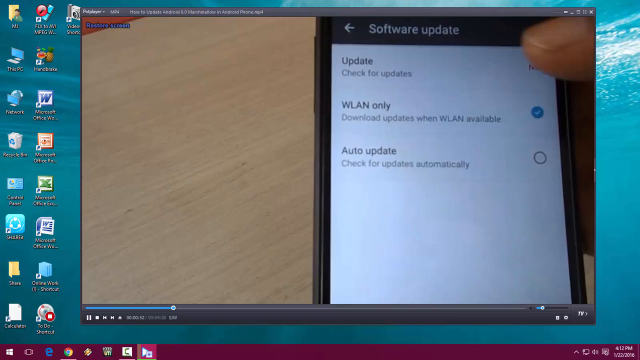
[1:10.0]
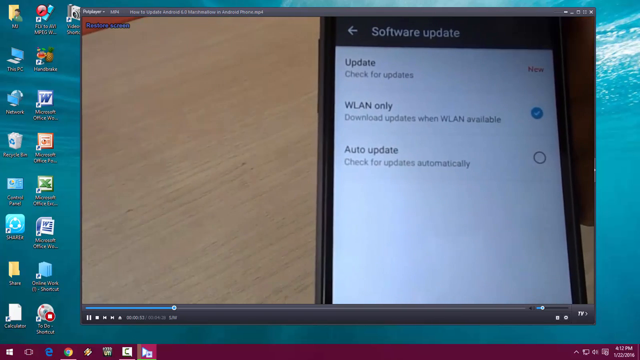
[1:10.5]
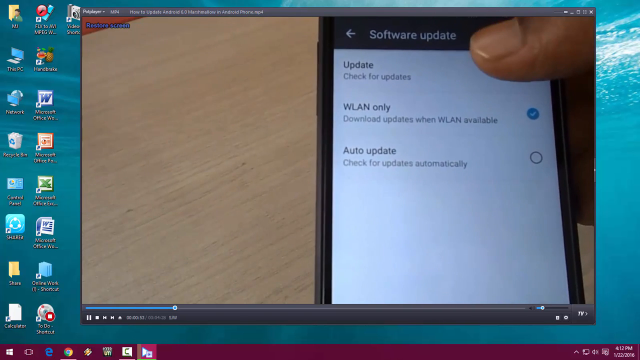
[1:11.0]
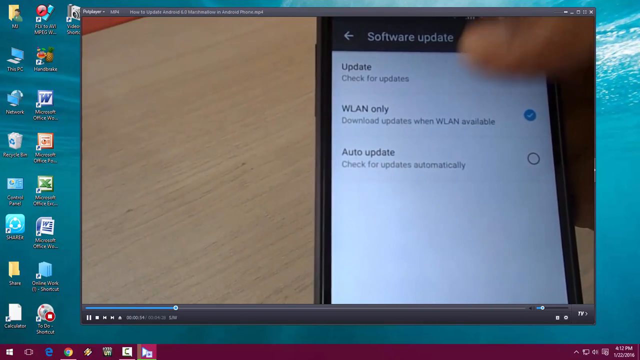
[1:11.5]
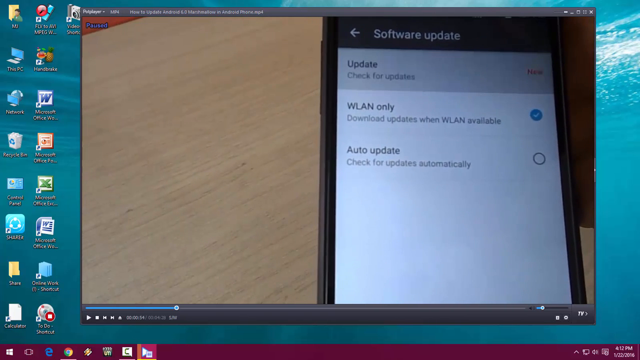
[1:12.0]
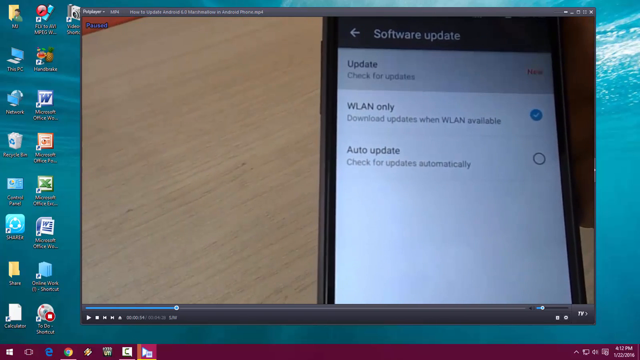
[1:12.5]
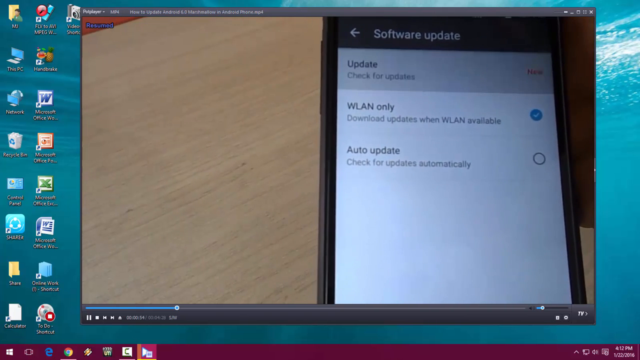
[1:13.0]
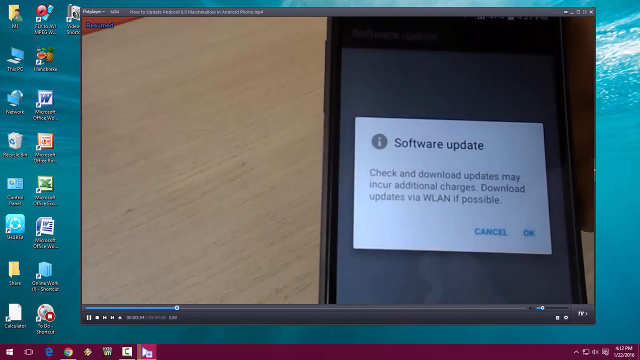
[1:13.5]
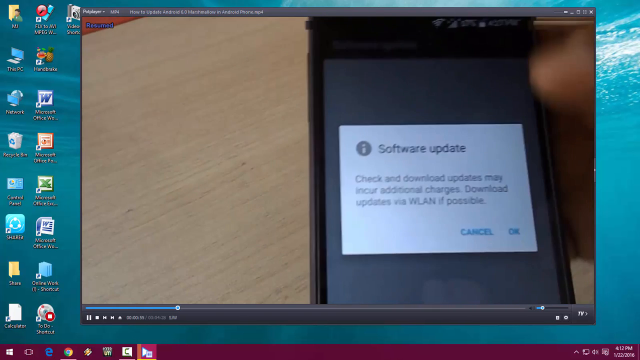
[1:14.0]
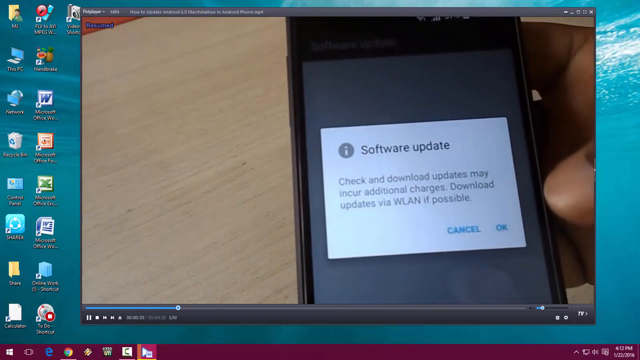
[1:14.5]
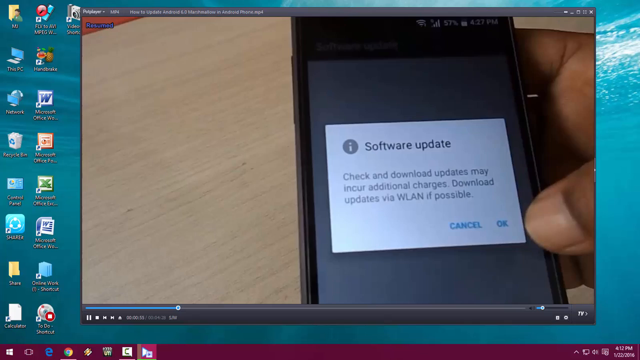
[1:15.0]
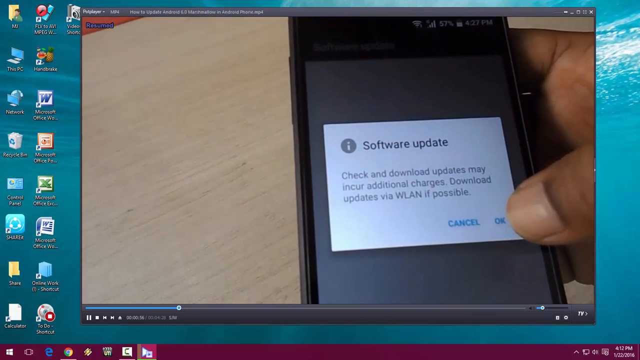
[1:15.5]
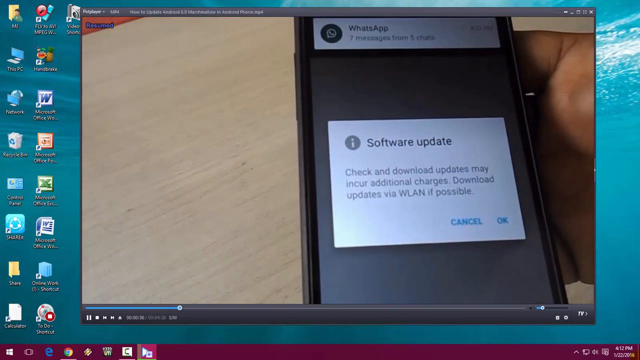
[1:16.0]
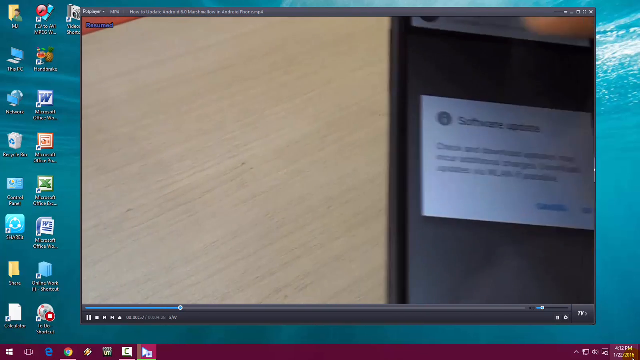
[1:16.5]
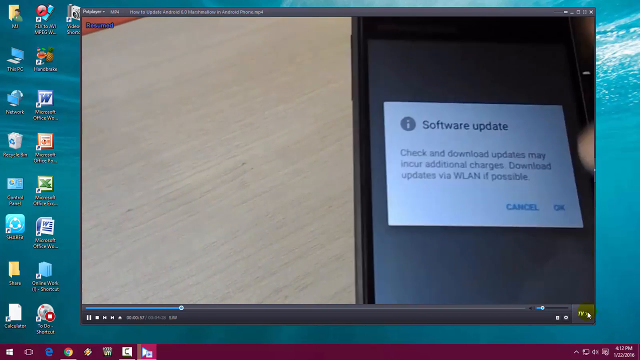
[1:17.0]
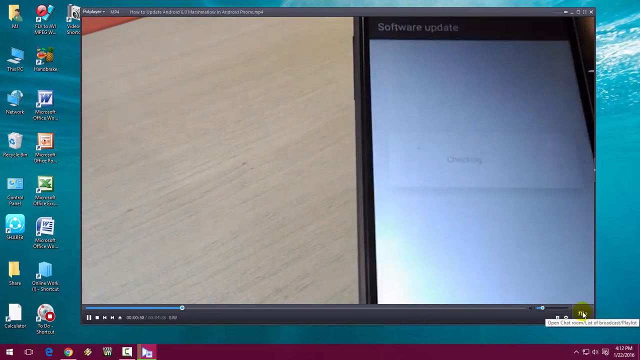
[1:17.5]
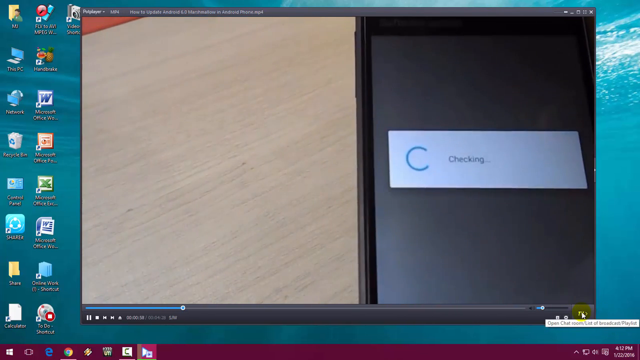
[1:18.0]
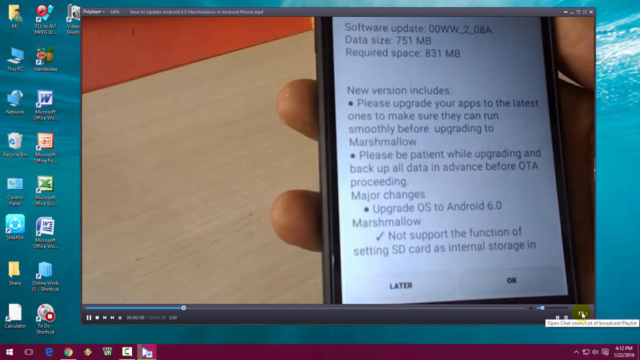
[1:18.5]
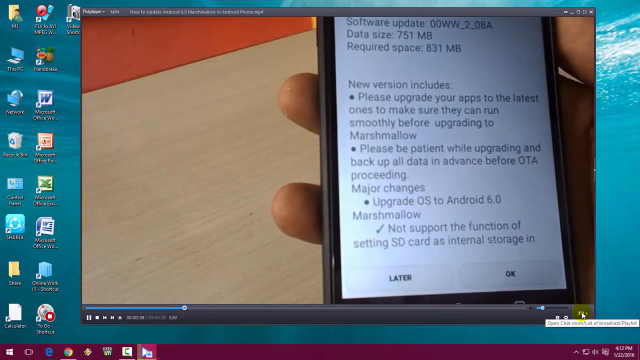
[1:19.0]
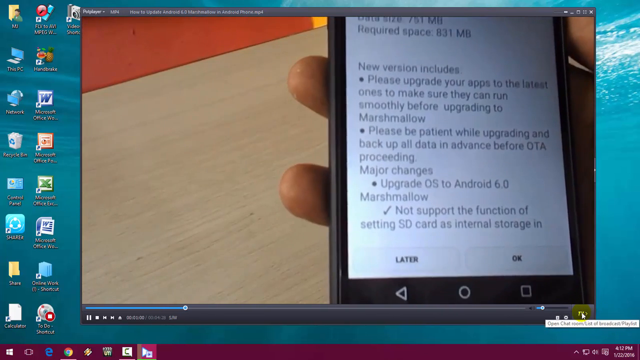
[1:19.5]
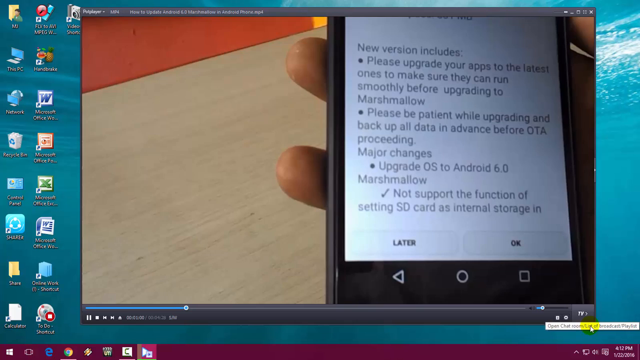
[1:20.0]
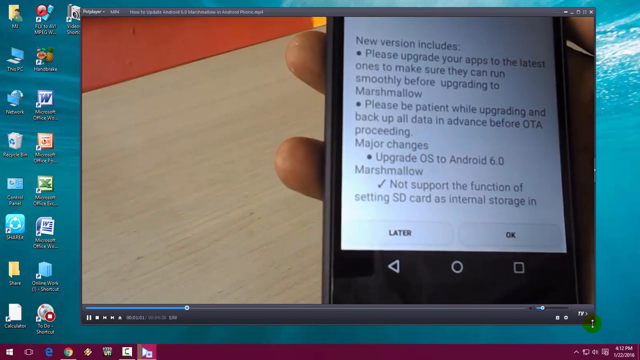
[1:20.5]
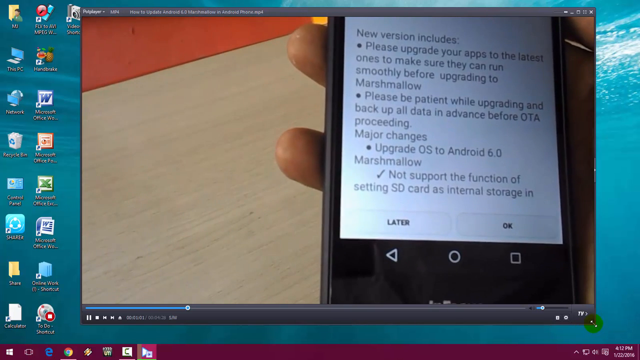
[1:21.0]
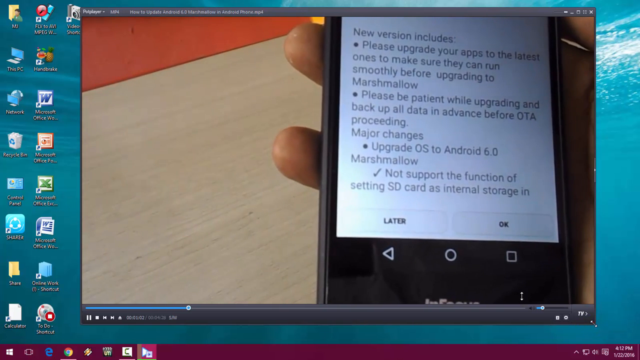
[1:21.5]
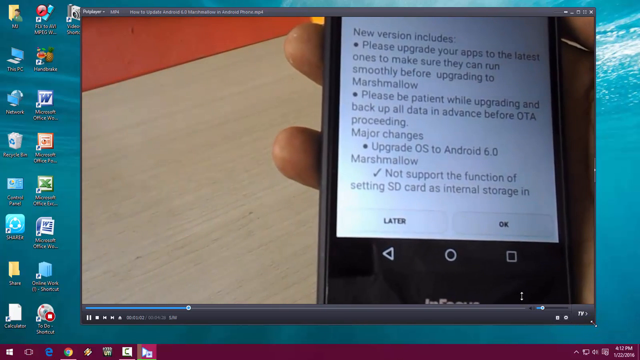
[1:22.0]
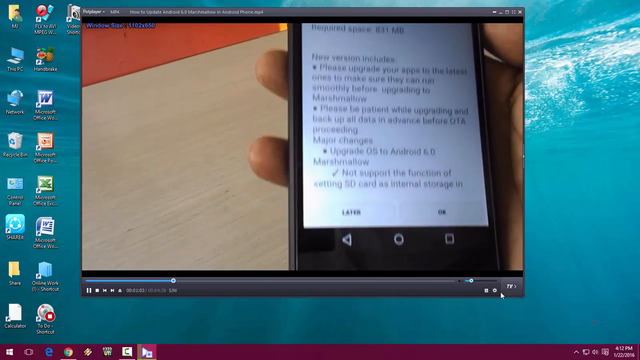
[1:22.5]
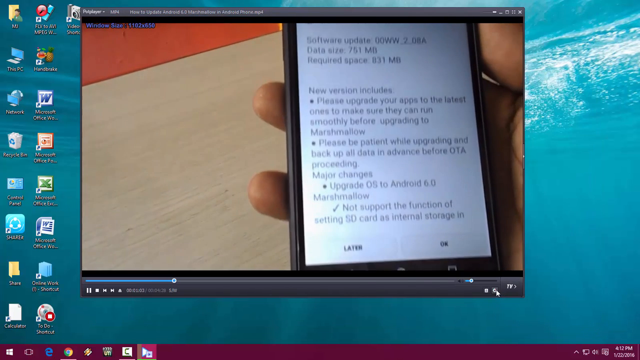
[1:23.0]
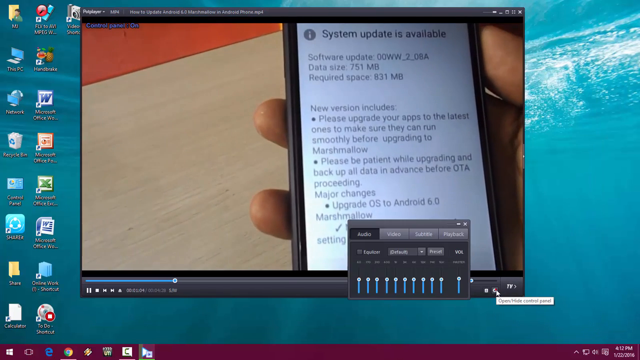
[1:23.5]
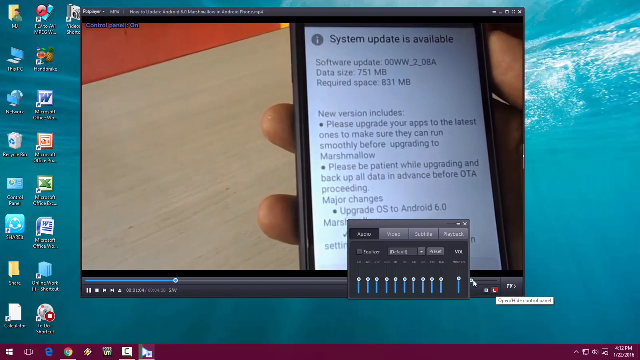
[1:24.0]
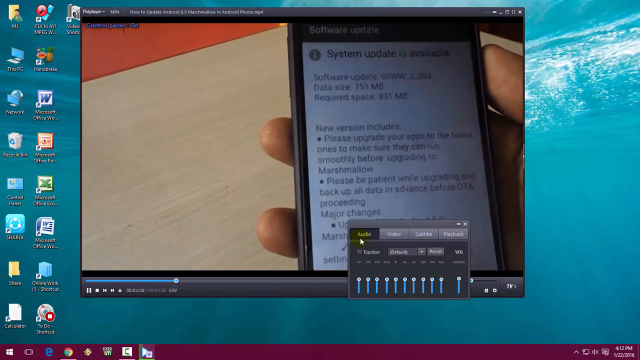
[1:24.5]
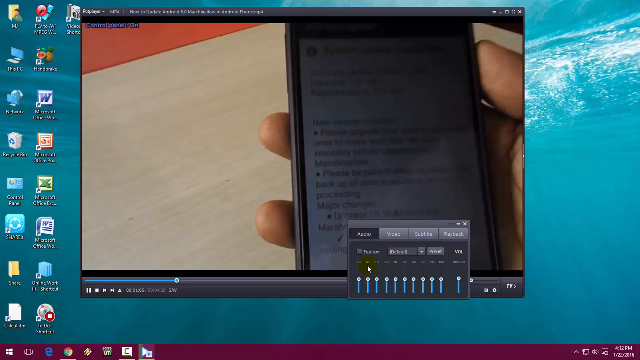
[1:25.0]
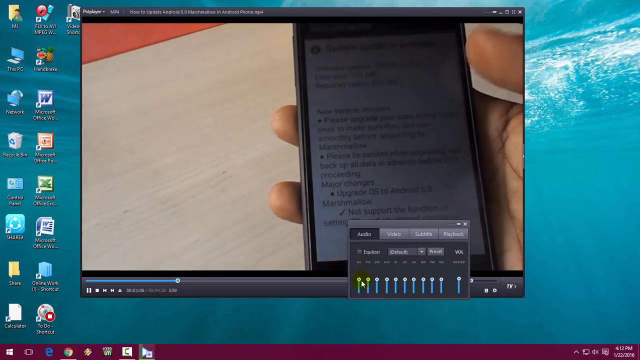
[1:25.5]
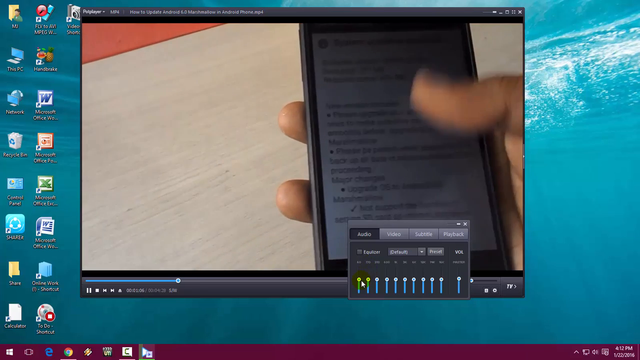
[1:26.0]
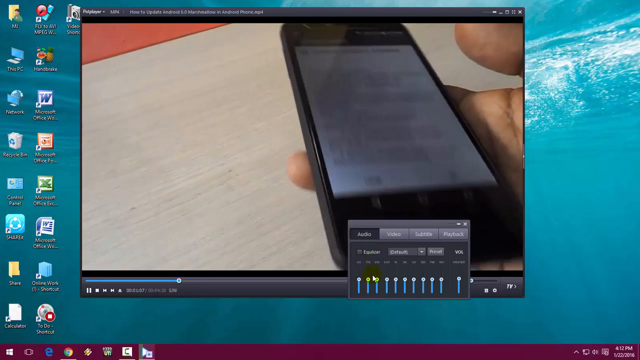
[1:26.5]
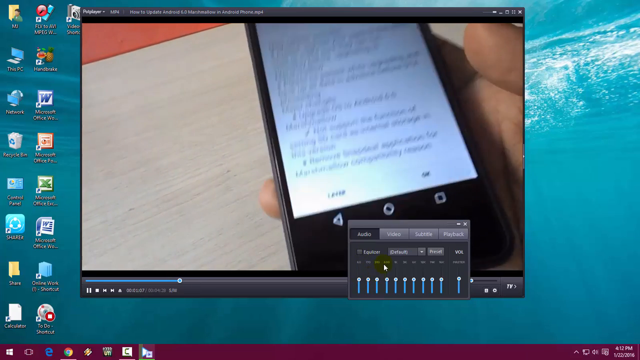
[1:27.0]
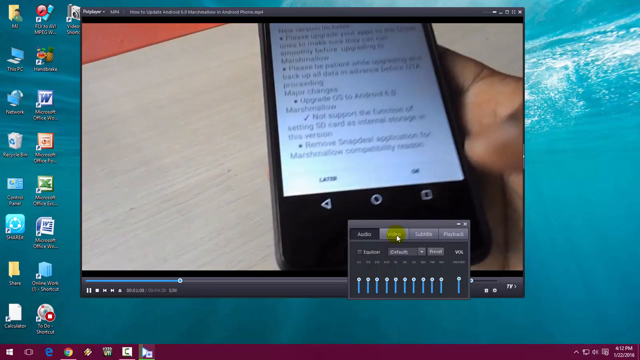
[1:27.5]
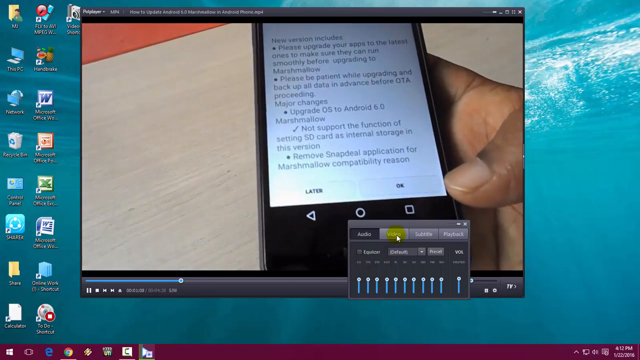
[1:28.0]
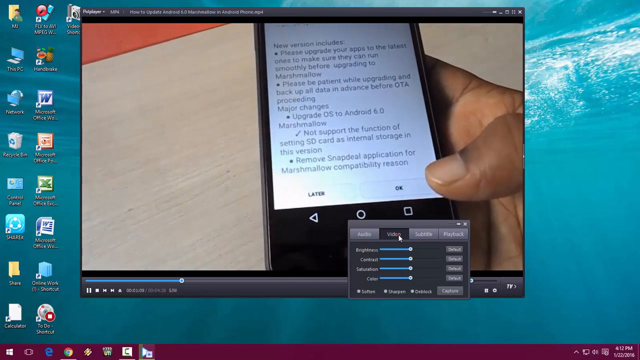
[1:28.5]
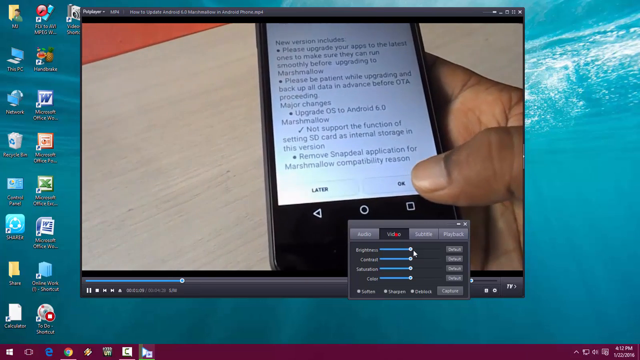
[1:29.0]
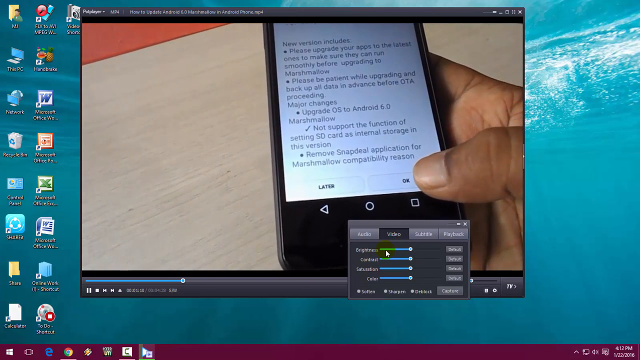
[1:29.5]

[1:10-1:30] A video plays in the PotPlayer video player, showing a close-up of a smartphone screen on a software update system page with three options: "update", "WLAN only" and "auto update". The person selects Update at the top, prompting a white pop-up box that says "software Update, check and download updates may incur additional charges. Download updates via WLAN if possible", with a cancel and an okay button. The person presses okay, but a notification from WhatsApp pops up at the top of the screen and they tap it to make it go away. They click OK on the pop-up box again, and another box appears saying "checking" with a kind of loading circle. After that, a screen gives information on the software update, such as its data size and required size and what the new version includes, with a "later" button and an "okay" button at the bottom. The user then clicks the control panel icon at the bottom right of the video player, and a rectangular box pops up with four tabs: "Audio", "Video", "Subtitle" and "Playback". The Audio tab is open, and the panel underneath has many volume sliders lined up. The cursor clicks the Video tab, showing sliders for brightness, contrast, saturation and color, and the mouse kind of just hovers over the brightness slider.